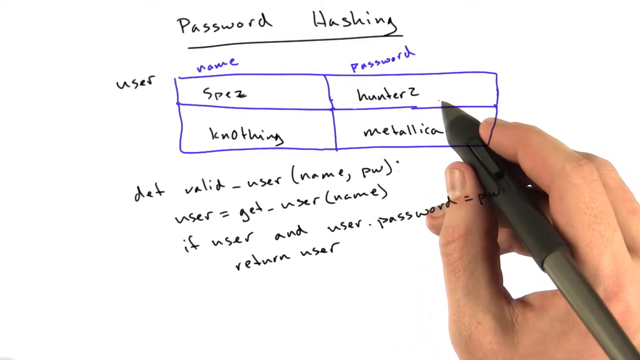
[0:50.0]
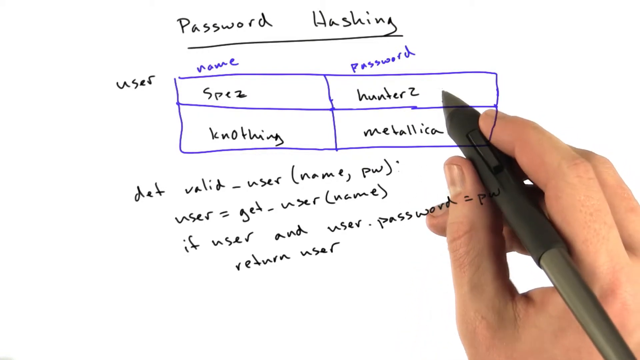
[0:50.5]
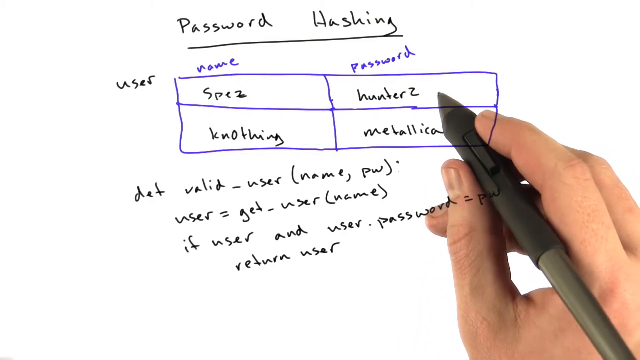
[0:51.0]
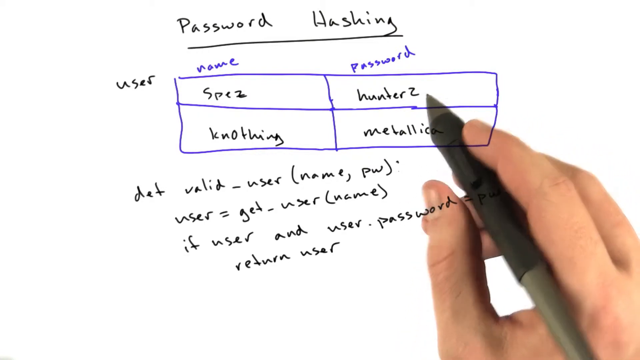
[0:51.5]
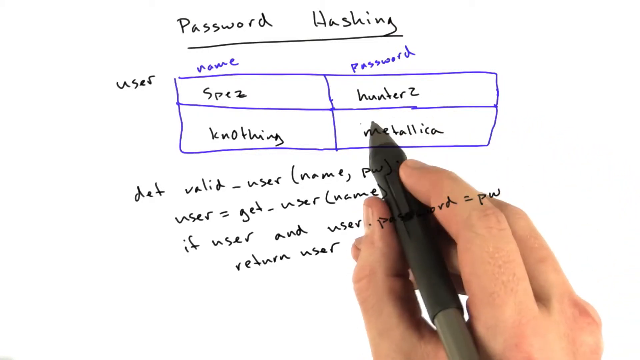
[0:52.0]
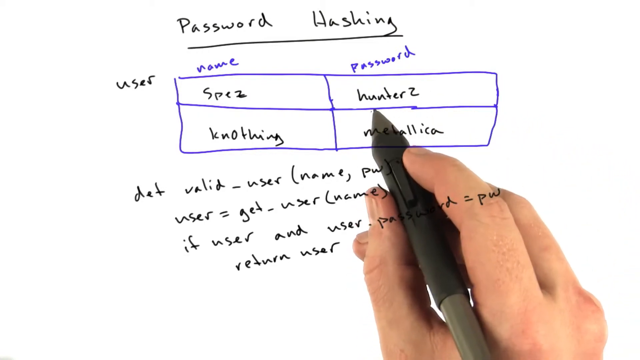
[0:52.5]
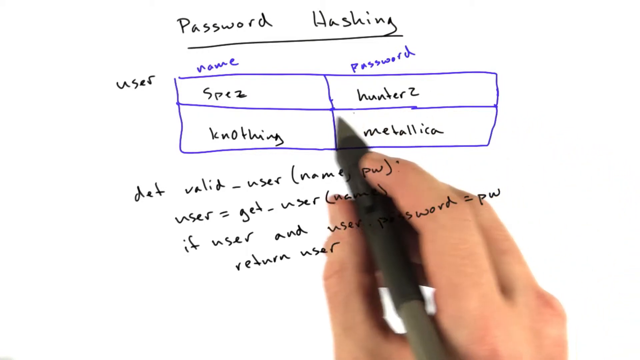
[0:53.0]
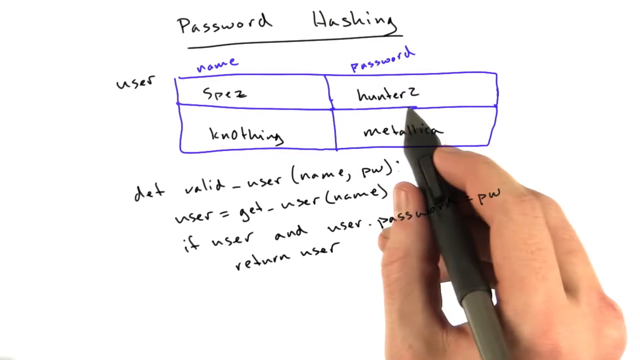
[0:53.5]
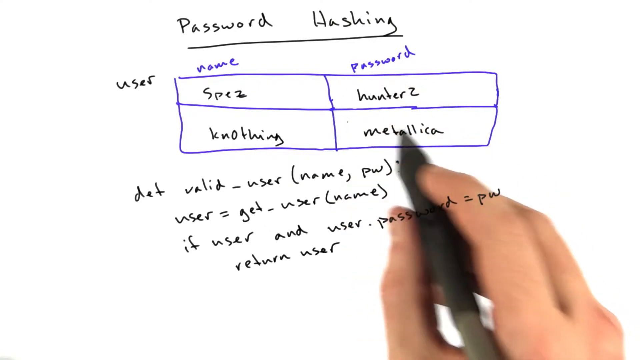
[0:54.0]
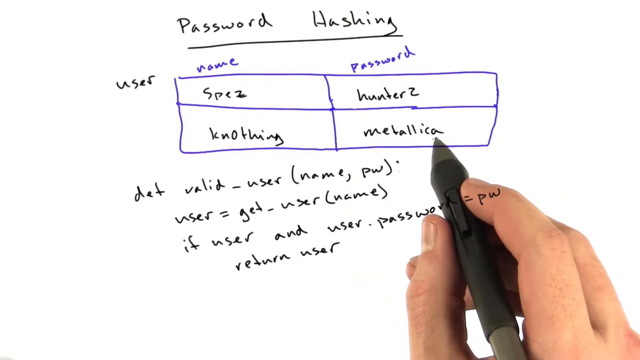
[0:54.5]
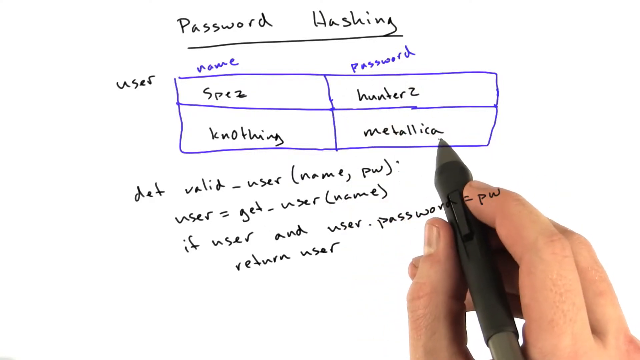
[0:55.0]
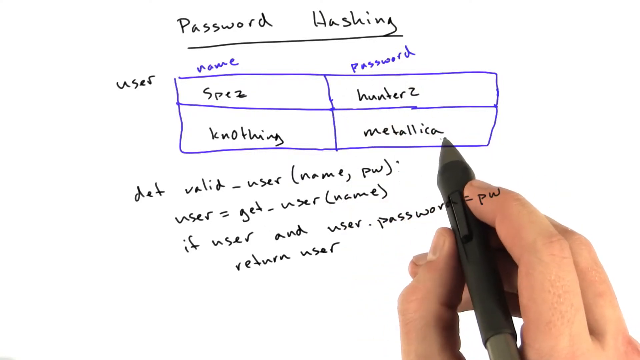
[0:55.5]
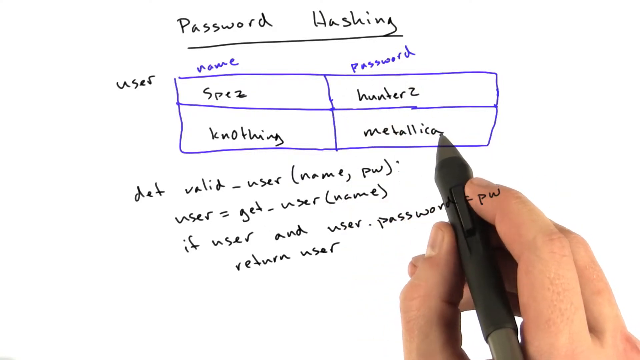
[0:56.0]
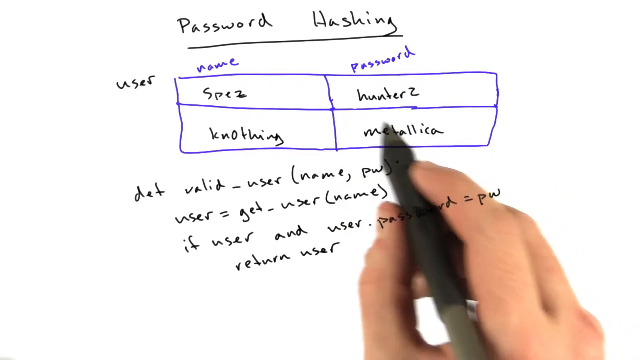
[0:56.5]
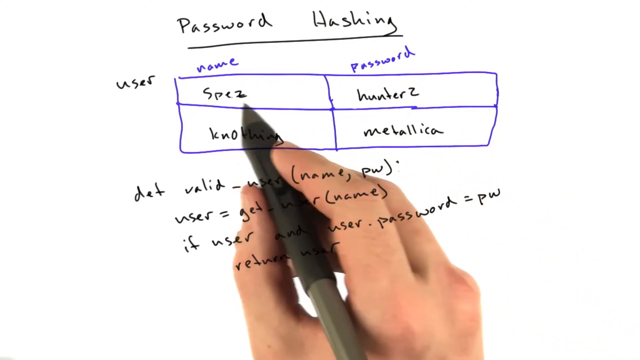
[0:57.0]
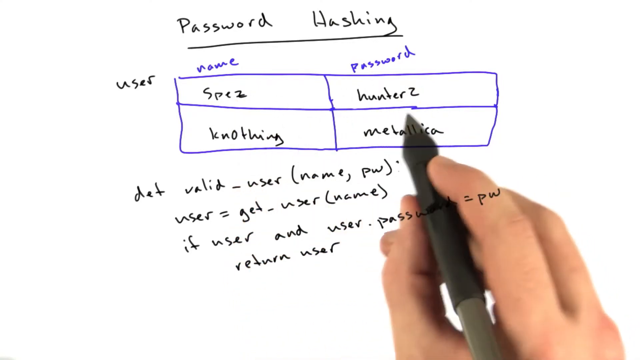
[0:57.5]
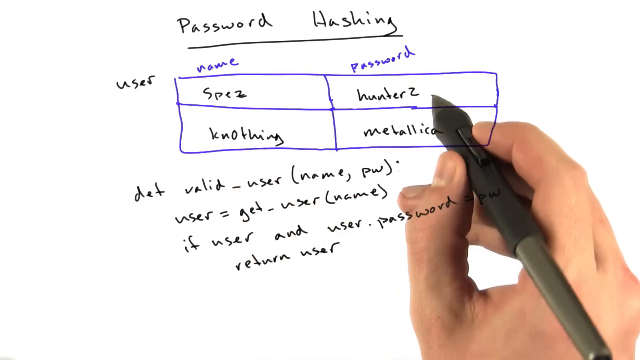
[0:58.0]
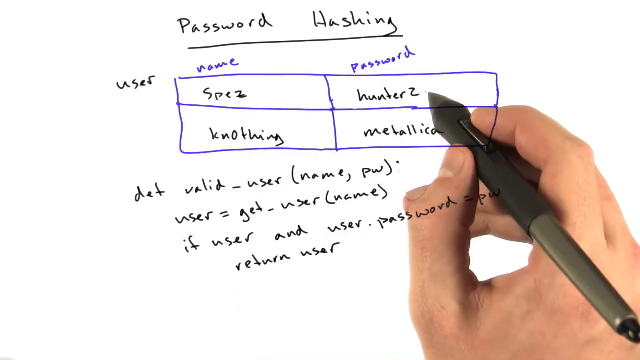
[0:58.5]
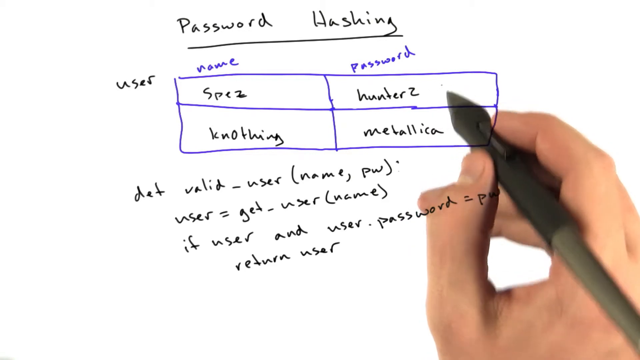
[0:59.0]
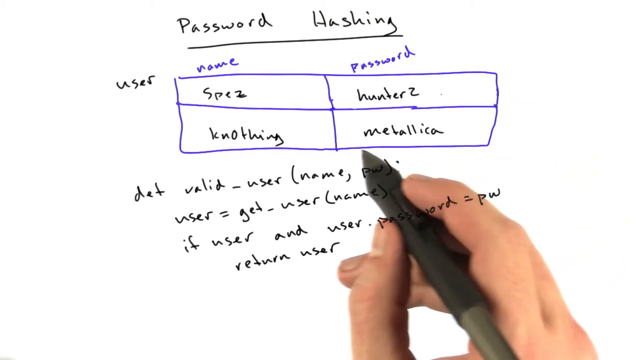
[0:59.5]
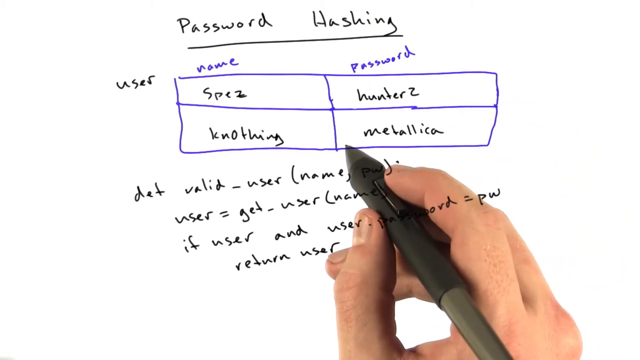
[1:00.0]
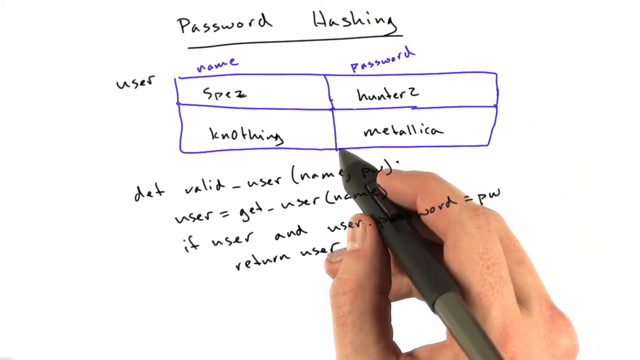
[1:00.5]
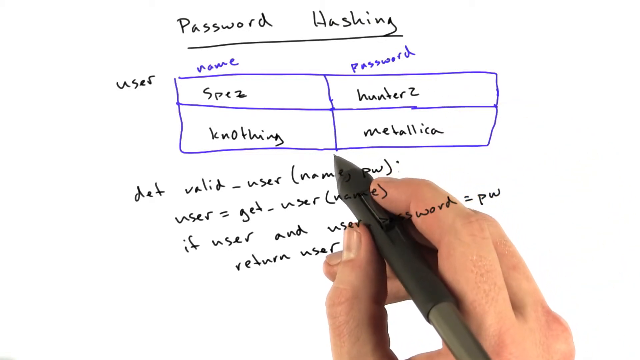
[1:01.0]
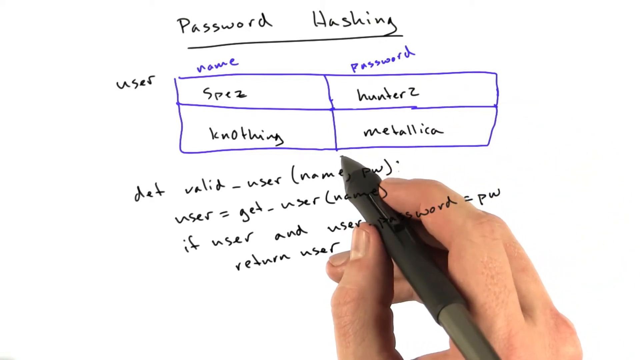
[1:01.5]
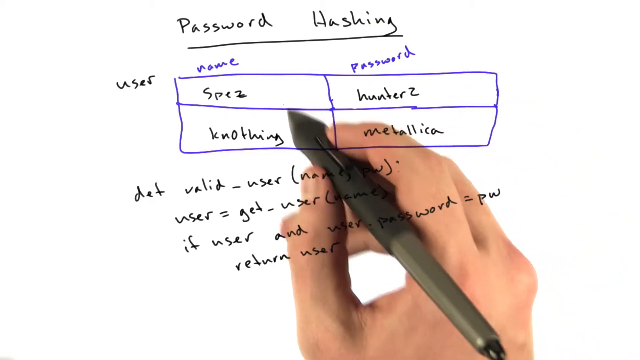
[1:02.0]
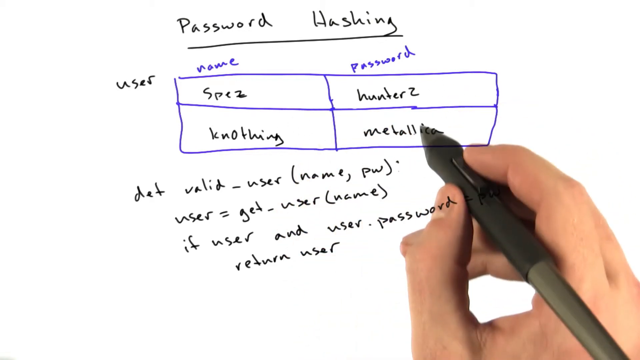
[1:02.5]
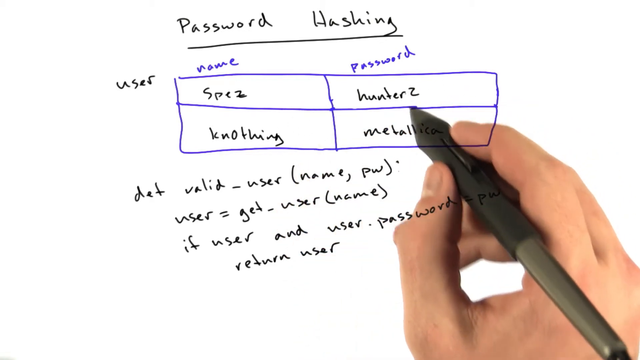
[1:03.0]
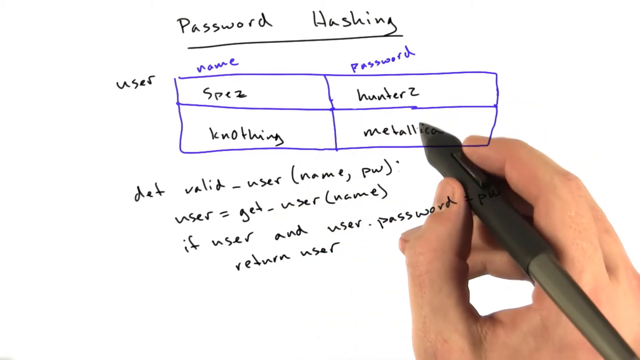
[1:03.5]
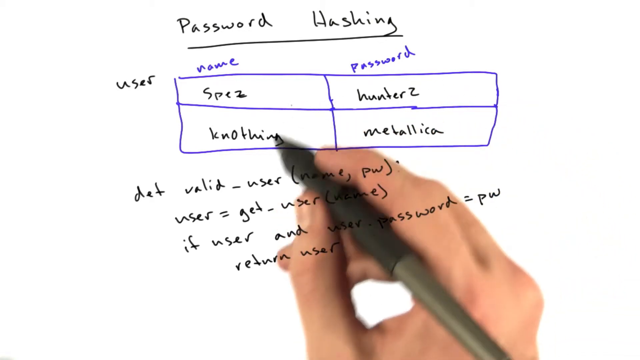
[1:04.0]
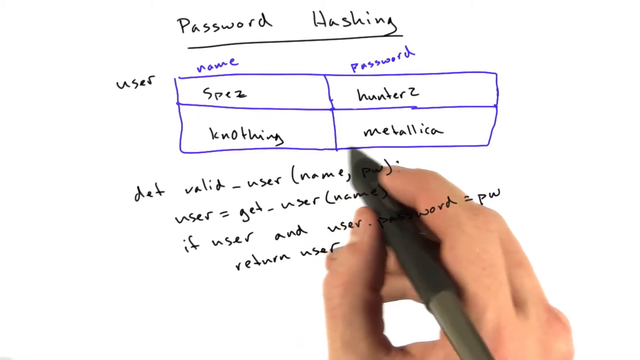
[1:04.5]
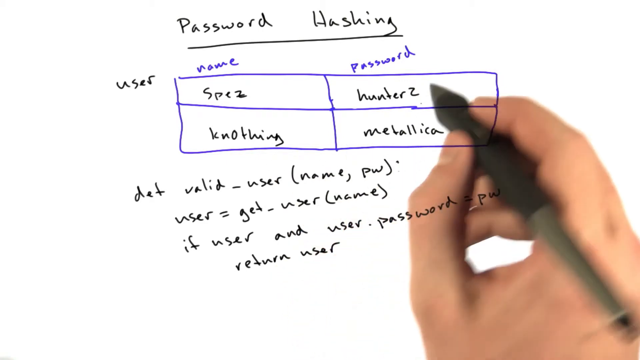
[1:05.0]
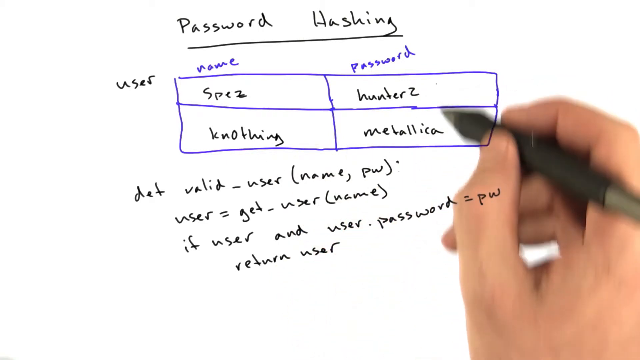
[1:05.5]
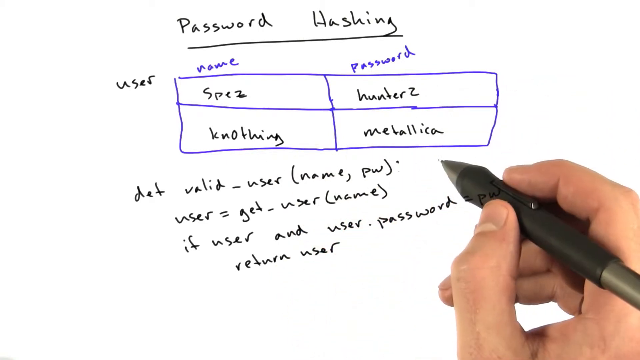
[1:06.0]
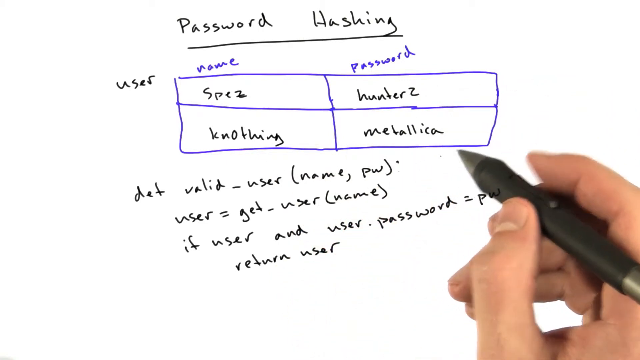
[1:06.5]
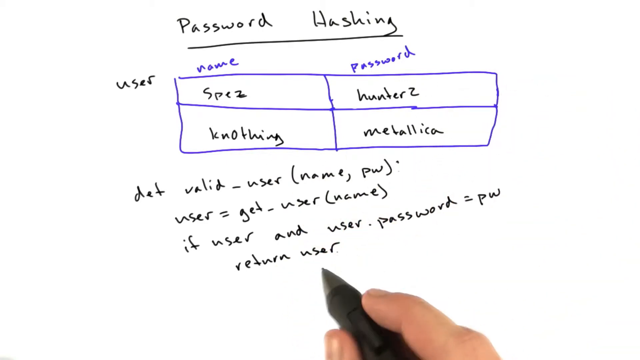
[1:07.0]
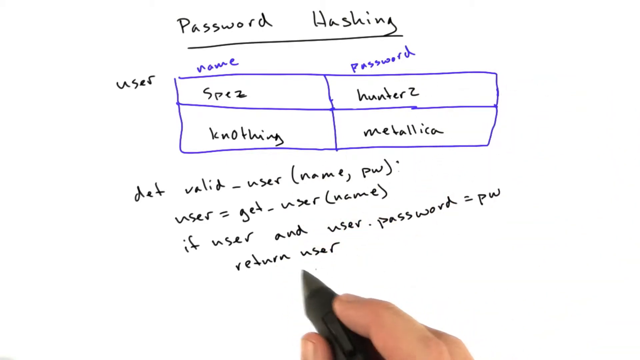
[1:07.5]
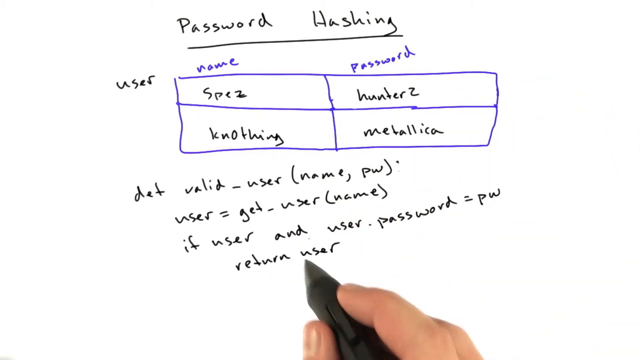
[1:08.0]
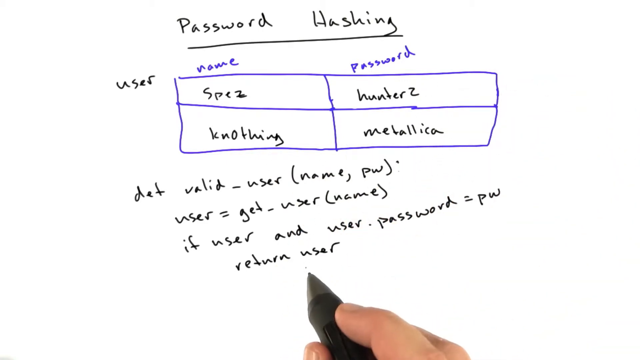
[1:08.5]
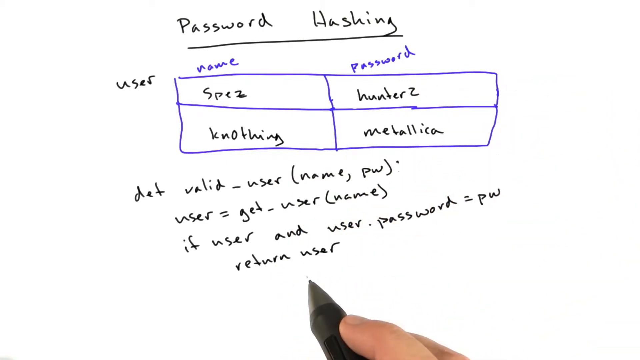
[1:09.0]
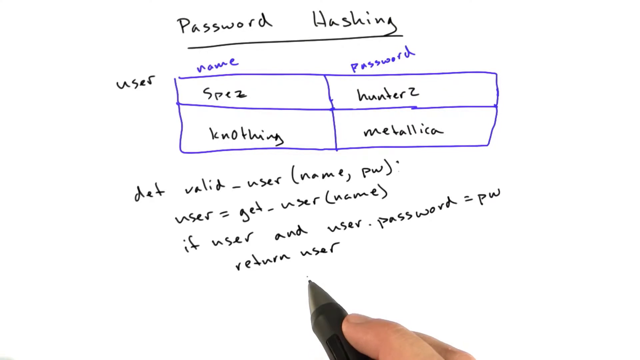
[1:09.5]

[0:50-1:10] The screen stays the same: the table of users and their passwords, with the function written below in Python-type pseudocode, named validUser. The person continues explaining the topic while moving the pen.